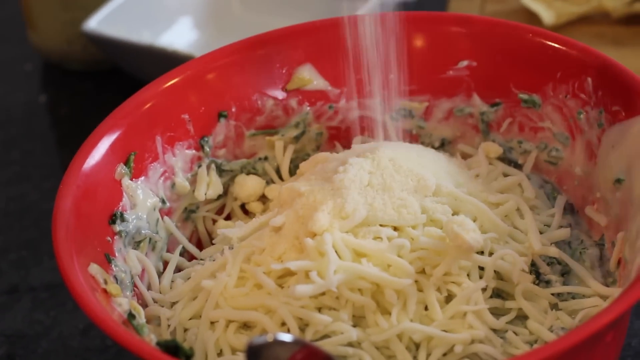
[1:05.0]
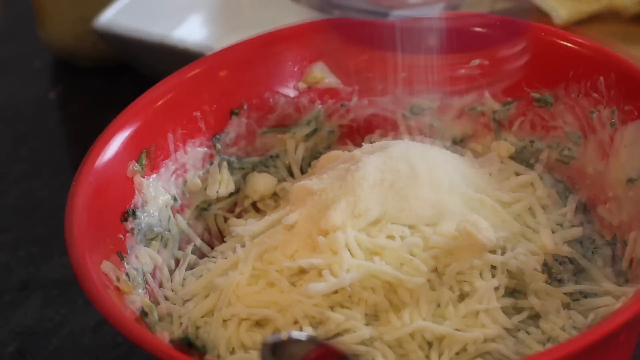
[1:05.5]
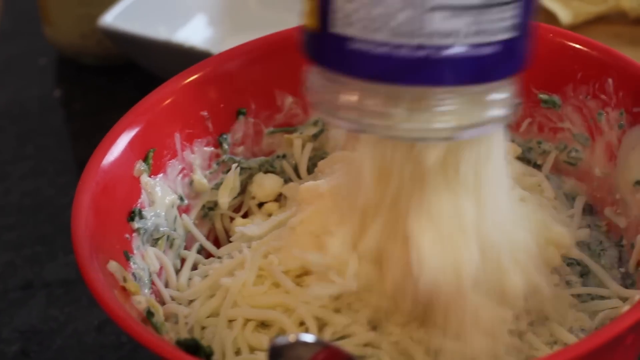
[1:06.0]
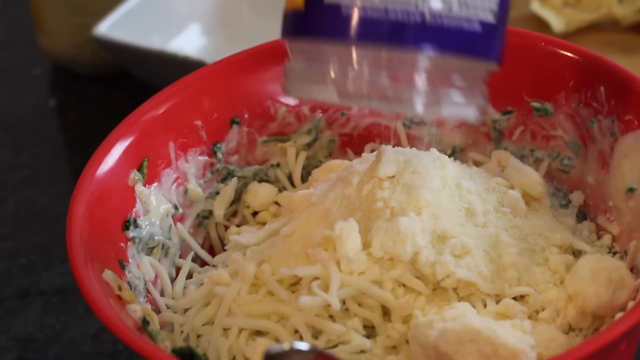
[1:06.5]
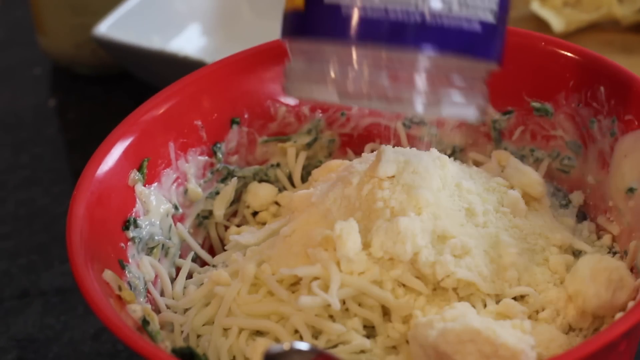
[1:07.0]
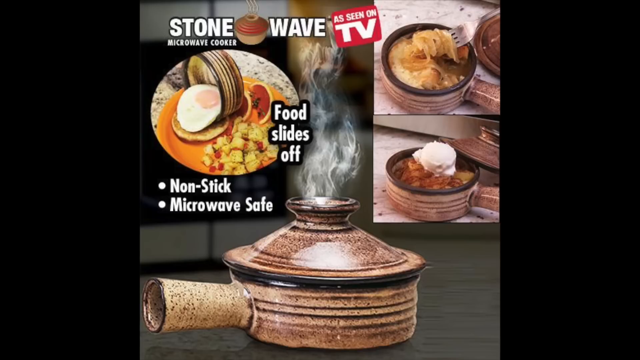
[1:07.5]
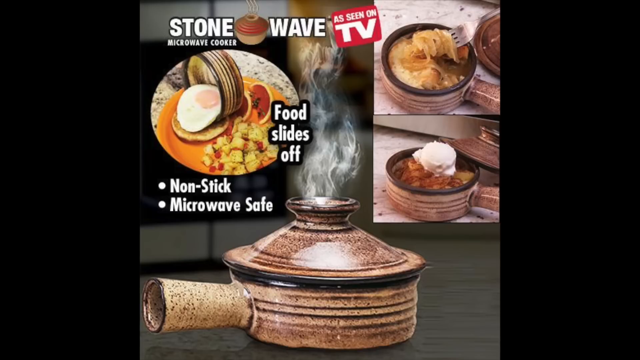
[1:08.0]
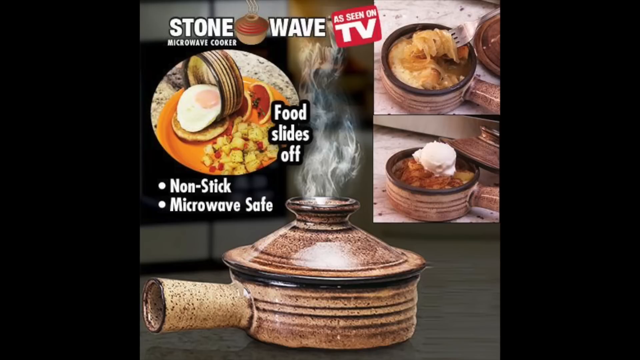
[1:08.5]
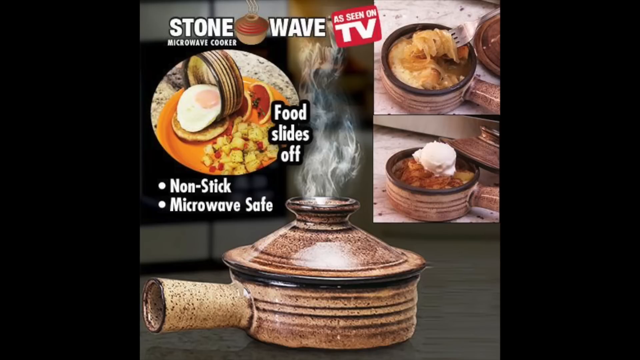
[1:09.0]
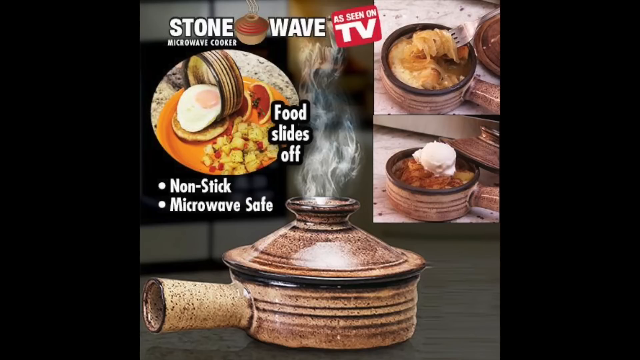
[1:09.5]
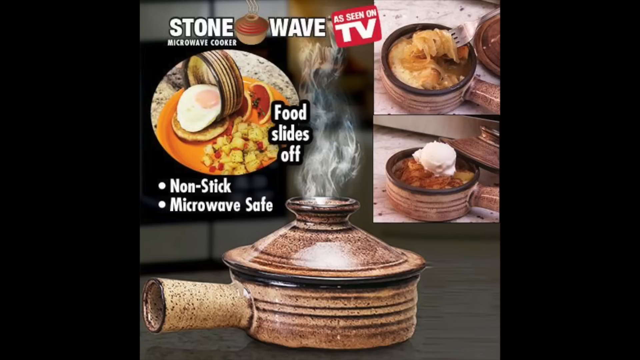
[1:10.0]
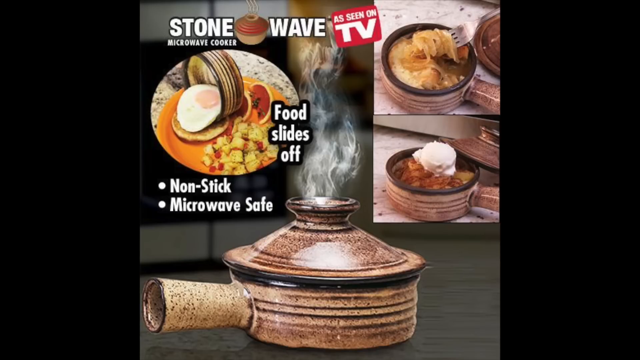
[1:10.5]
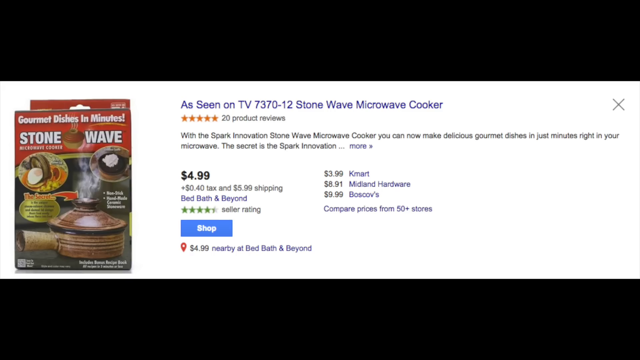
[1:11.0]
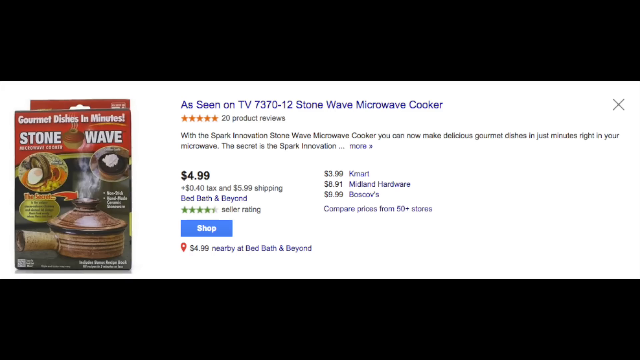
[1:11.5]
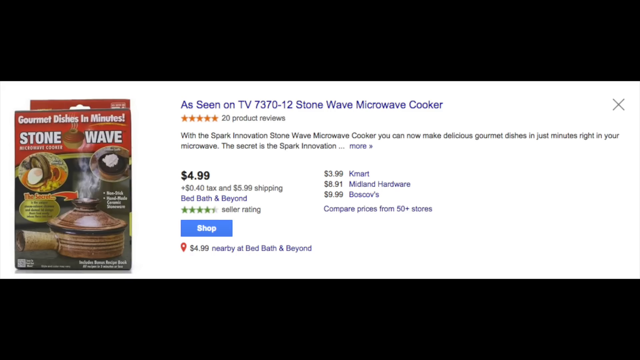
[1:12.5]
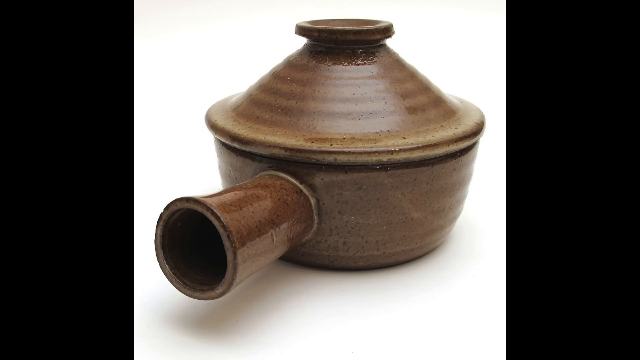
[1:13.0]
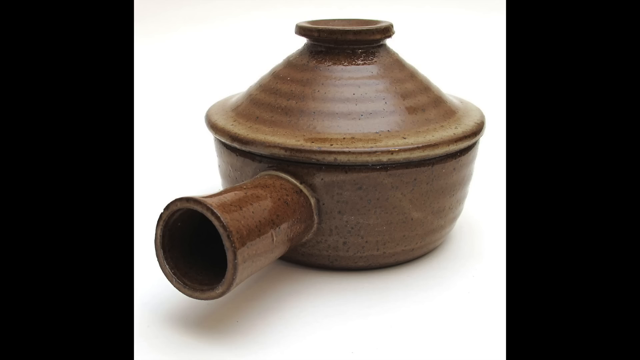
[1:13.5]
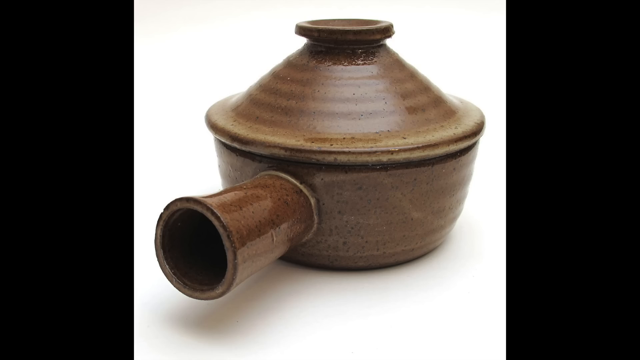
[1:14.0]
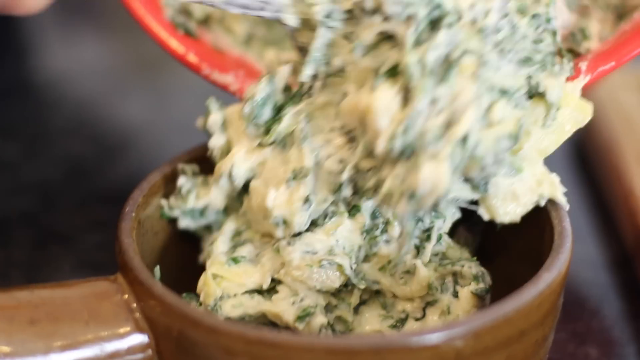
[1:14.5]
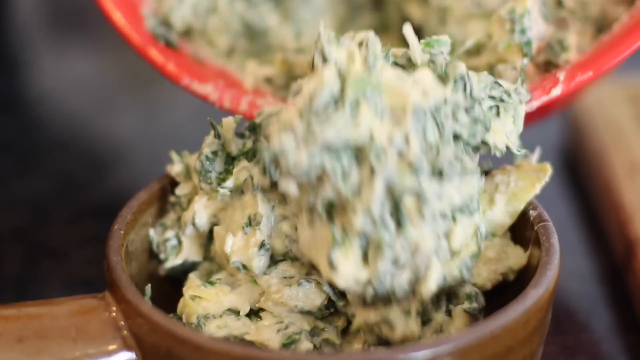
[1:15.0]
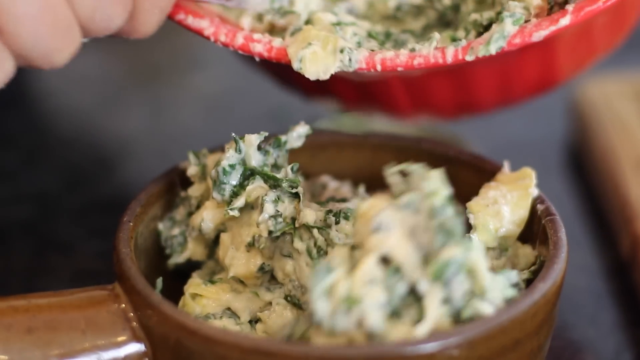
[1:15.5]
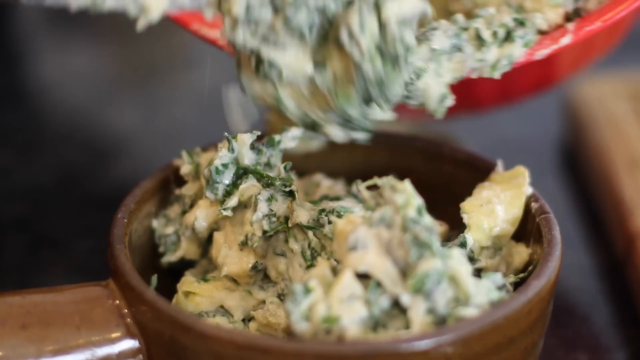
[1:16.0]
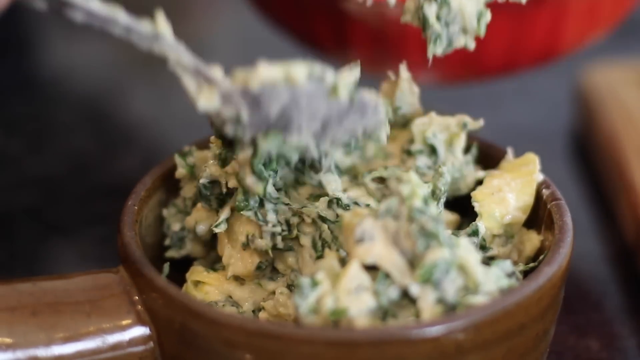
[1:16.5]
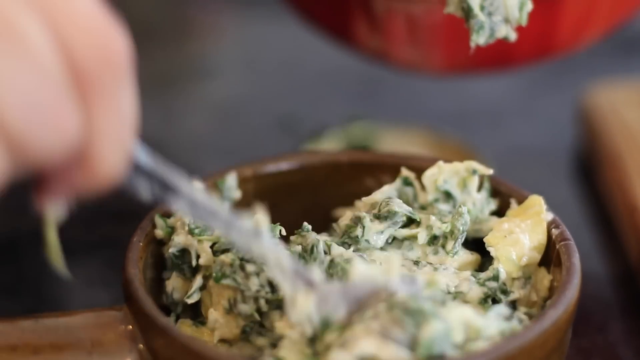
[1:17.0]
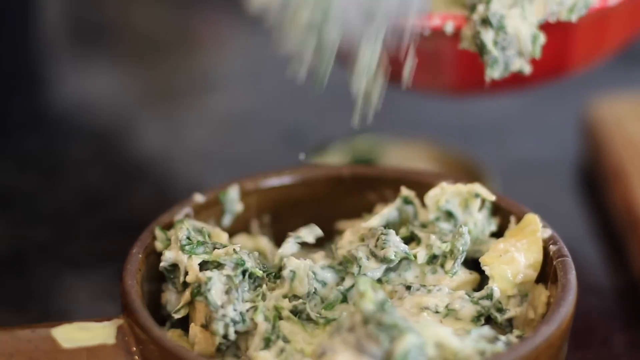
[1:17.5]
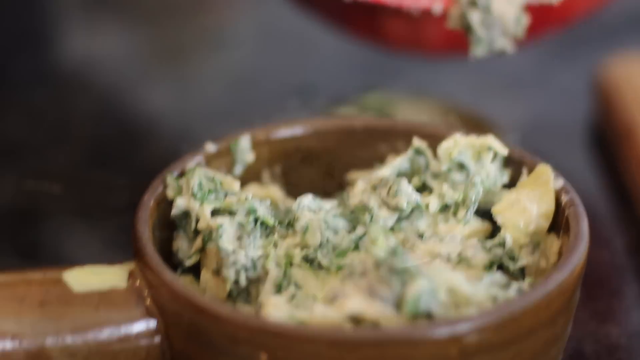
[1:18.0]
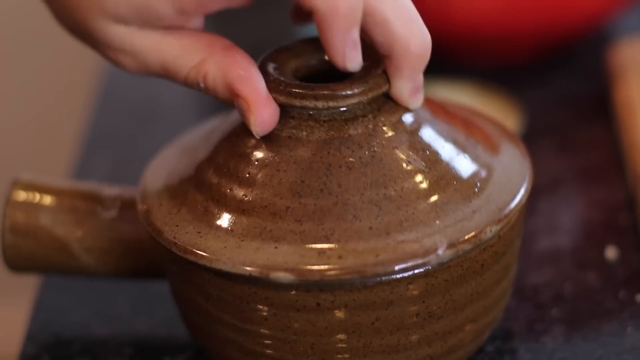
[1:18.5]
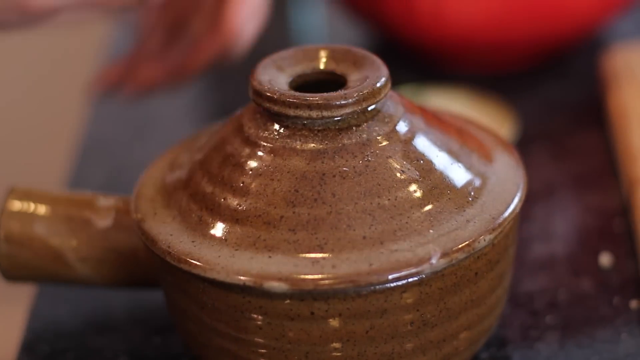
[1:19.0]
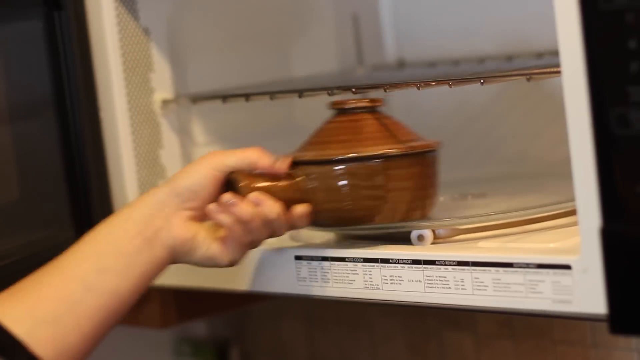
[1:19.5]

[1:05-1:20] The spinach comes out of the bowl and the microwave, which is black. The contents of a jar are emptied, with the liquid going down into the sink. Something is chopped, possibly onions. Then the spinach is mixed with the cheese in a red bowl. The logo of the little pink pig is still at the bottom right, apparently the channel's mascot. The mixture is still a bit solid but becomes creamy as it is mixed, with the cheese and everything going into the red bowl.